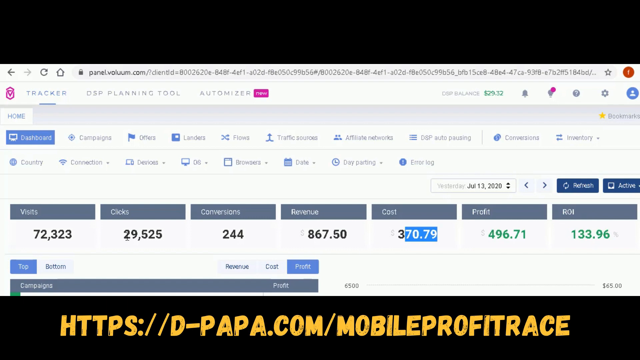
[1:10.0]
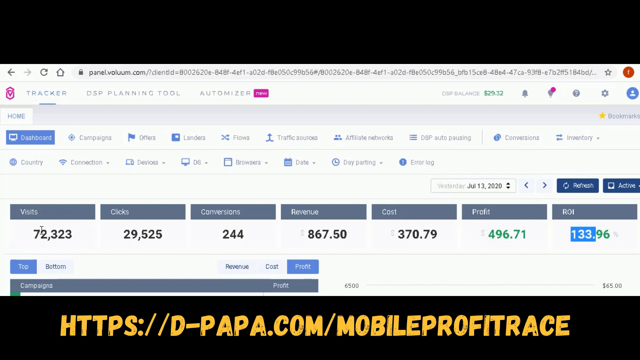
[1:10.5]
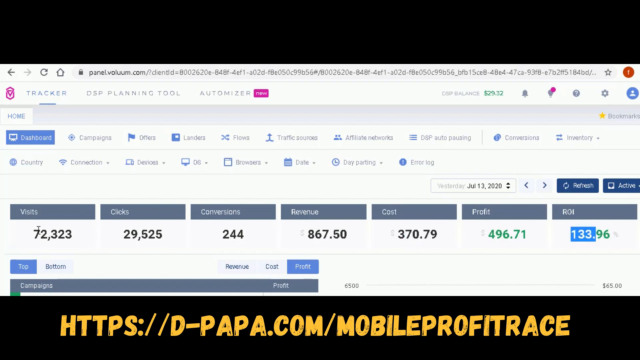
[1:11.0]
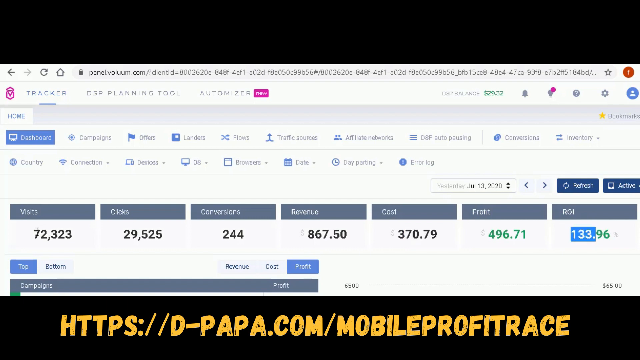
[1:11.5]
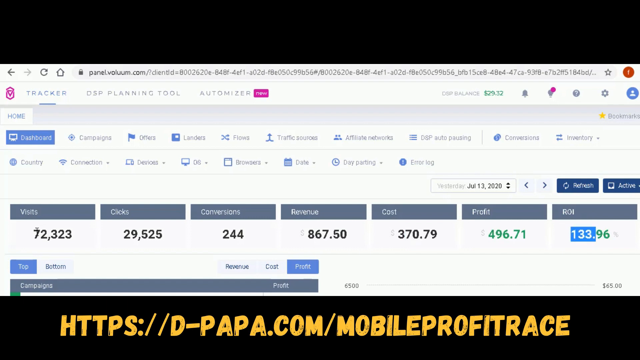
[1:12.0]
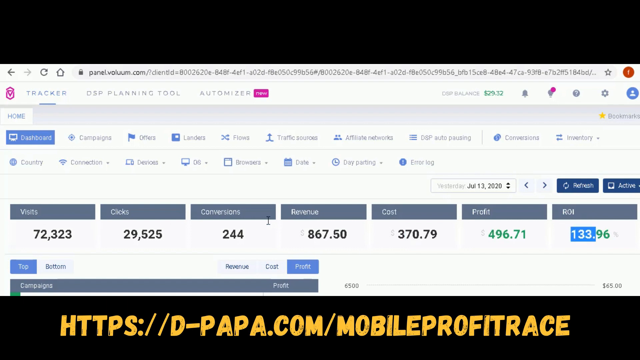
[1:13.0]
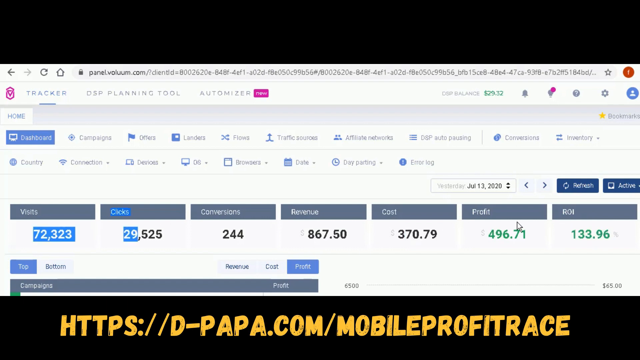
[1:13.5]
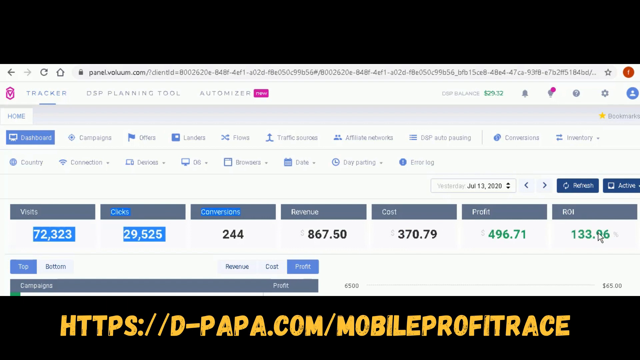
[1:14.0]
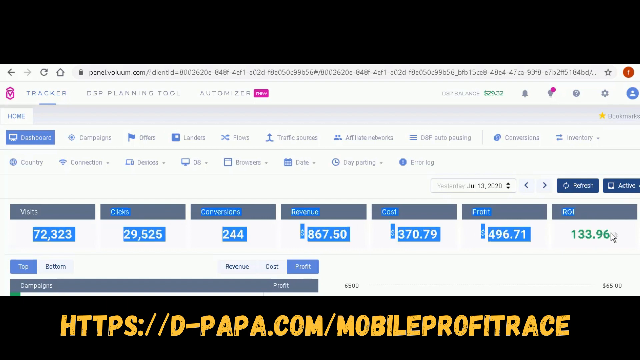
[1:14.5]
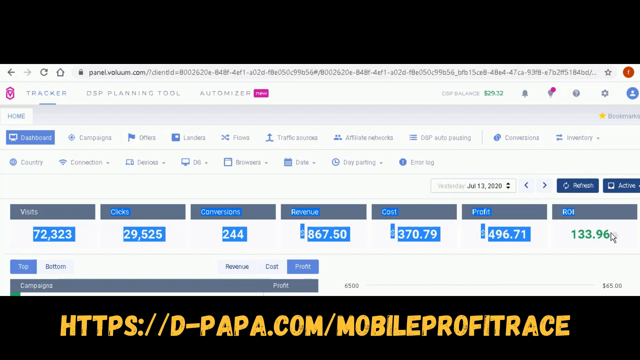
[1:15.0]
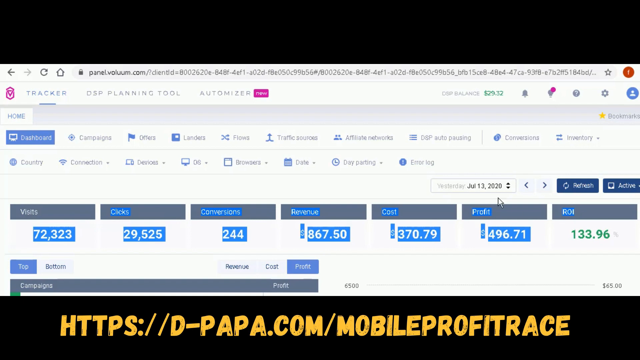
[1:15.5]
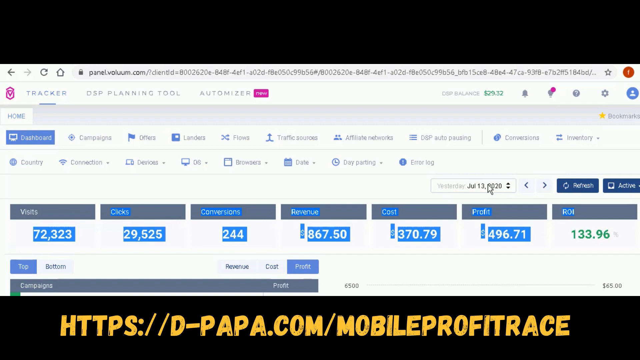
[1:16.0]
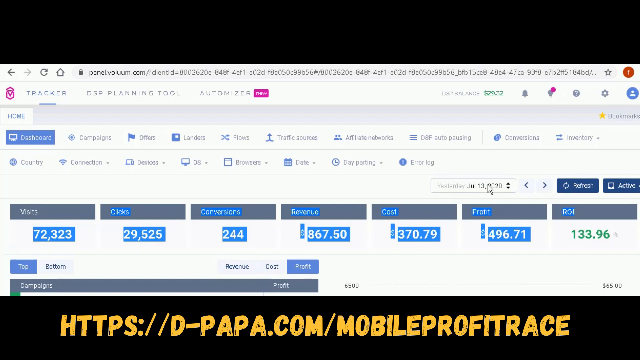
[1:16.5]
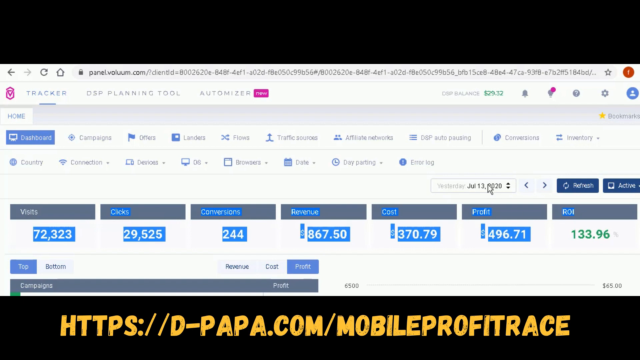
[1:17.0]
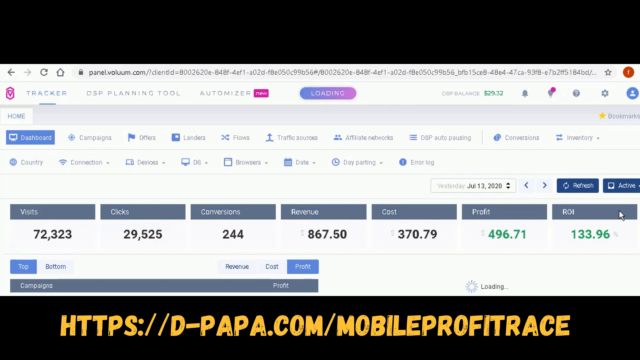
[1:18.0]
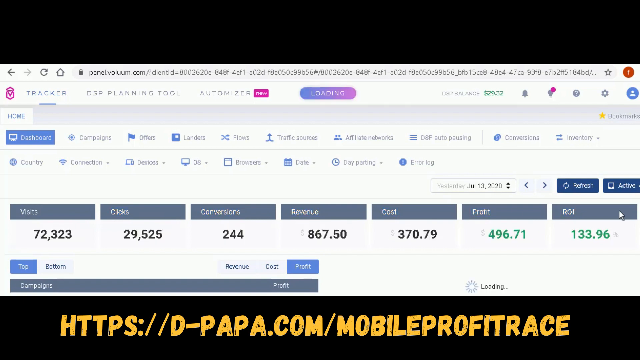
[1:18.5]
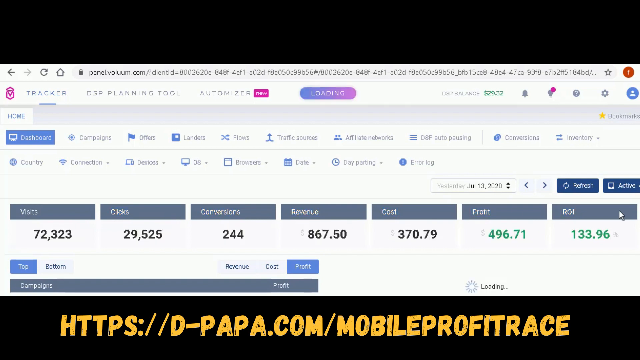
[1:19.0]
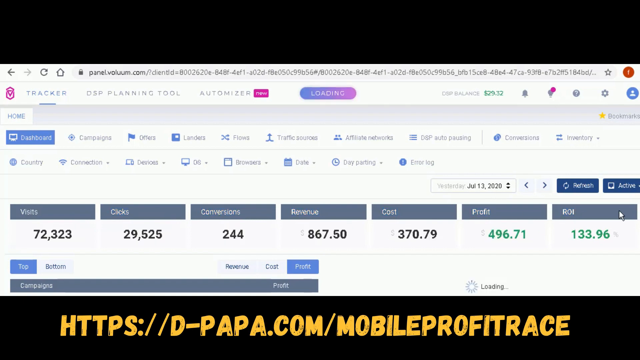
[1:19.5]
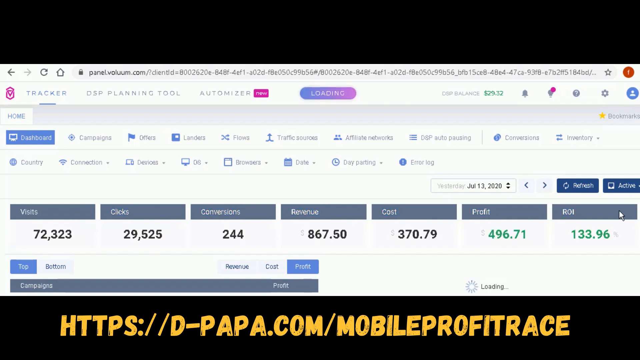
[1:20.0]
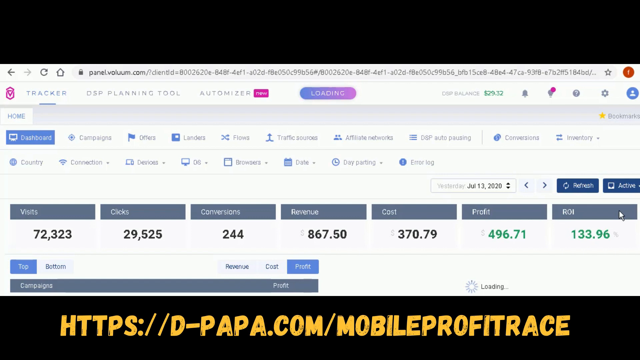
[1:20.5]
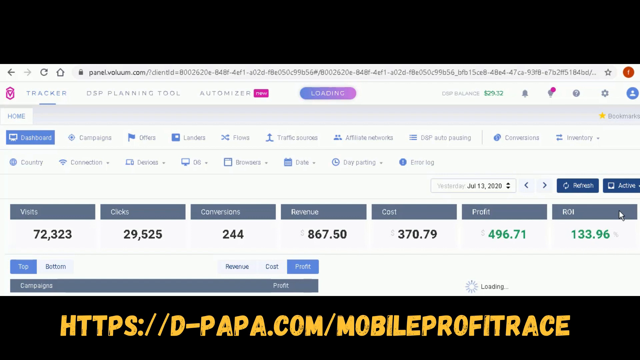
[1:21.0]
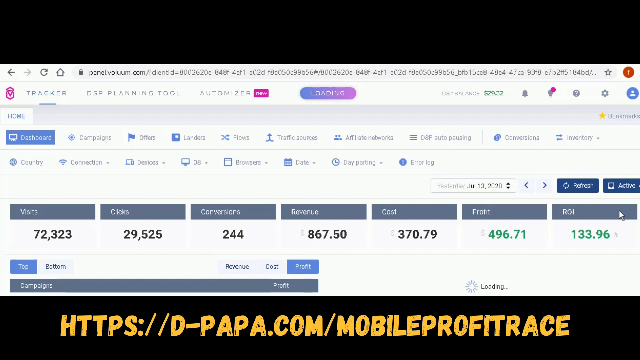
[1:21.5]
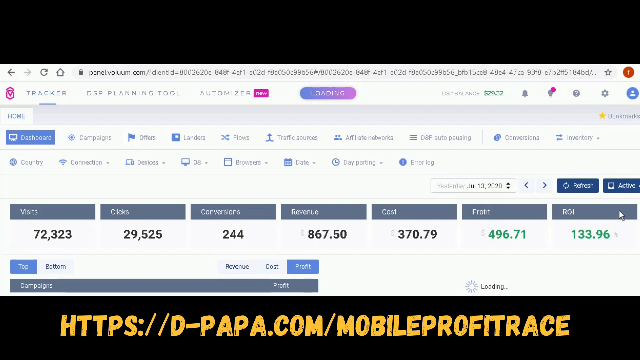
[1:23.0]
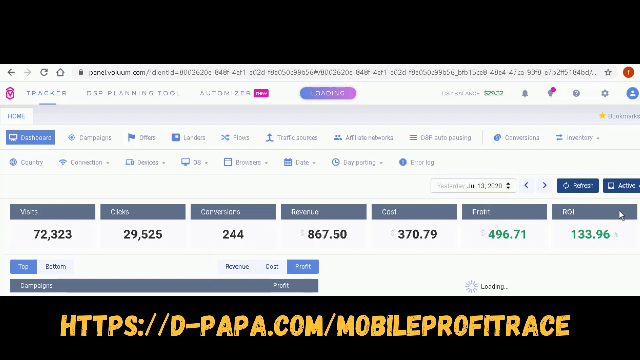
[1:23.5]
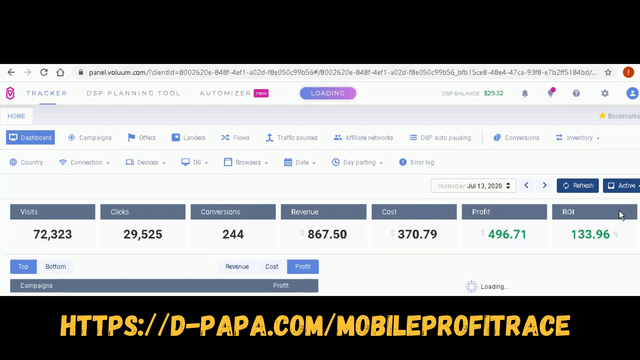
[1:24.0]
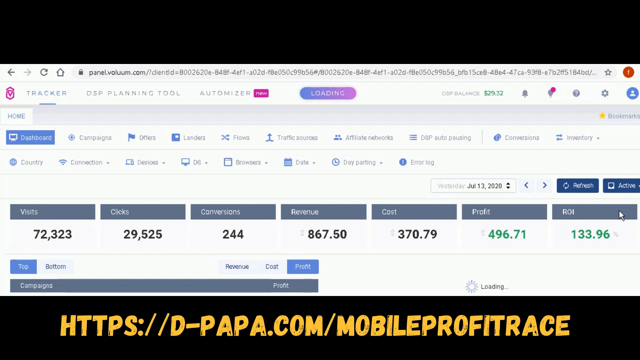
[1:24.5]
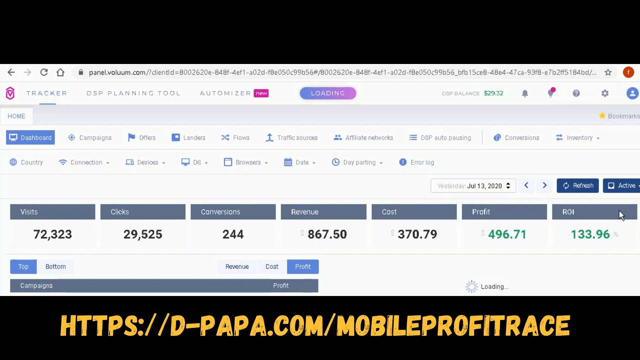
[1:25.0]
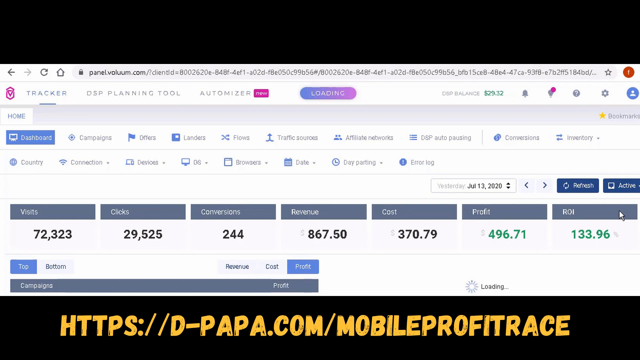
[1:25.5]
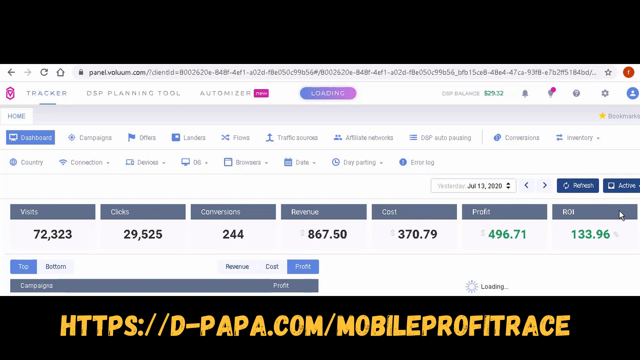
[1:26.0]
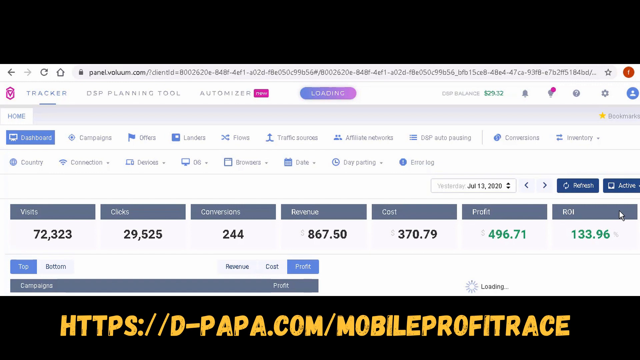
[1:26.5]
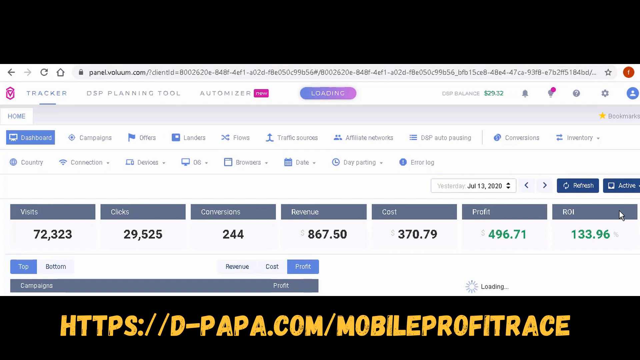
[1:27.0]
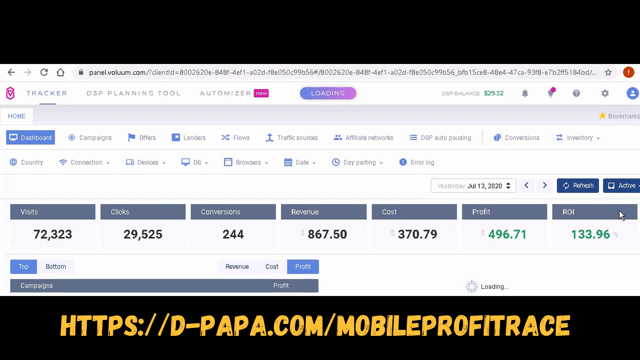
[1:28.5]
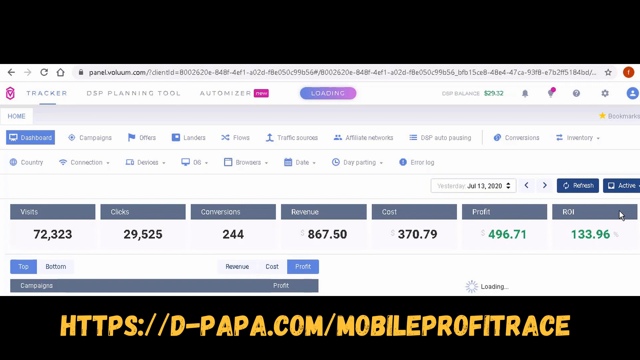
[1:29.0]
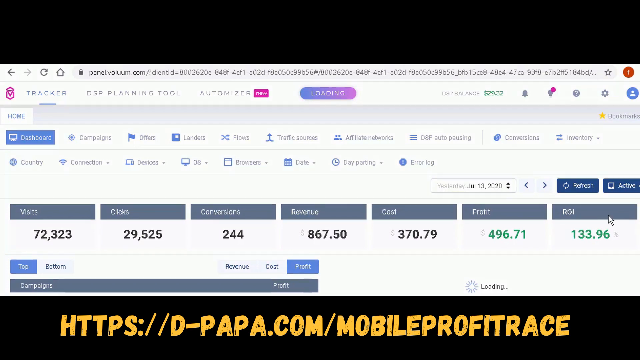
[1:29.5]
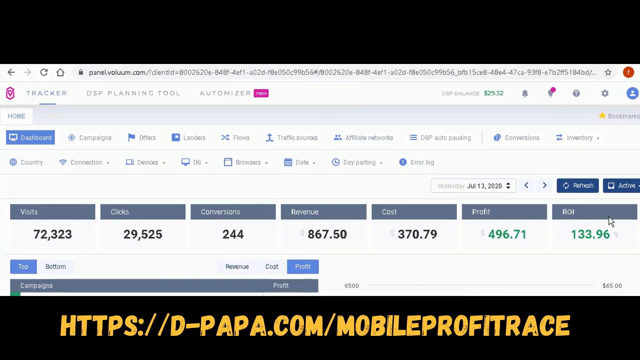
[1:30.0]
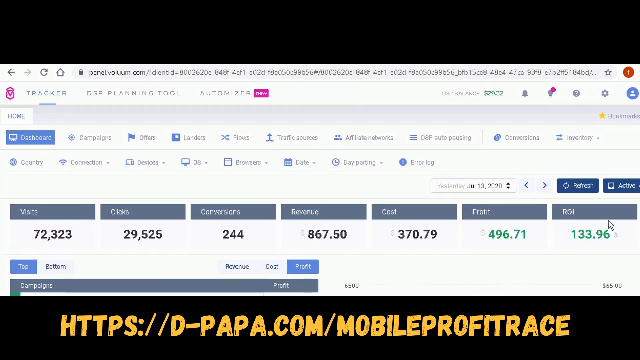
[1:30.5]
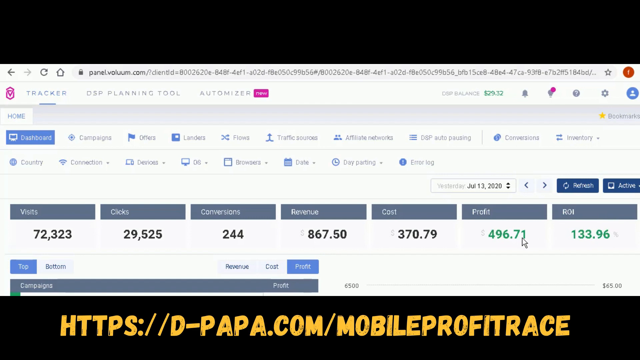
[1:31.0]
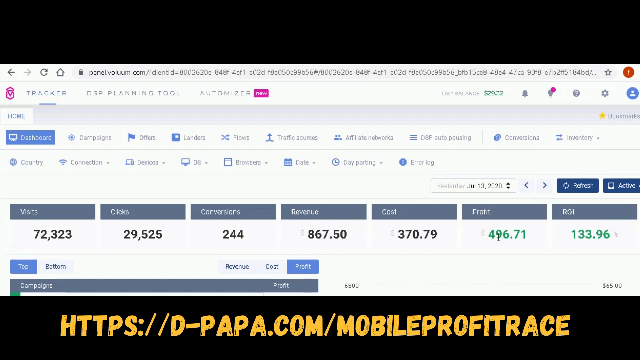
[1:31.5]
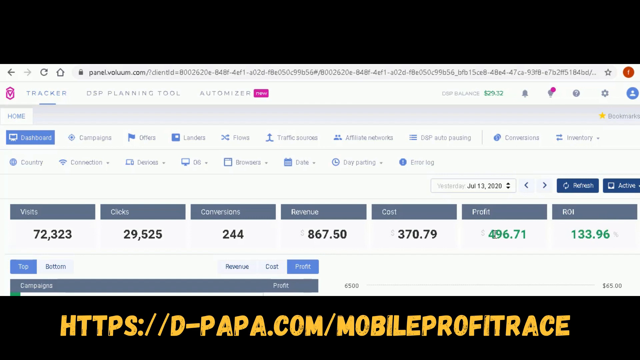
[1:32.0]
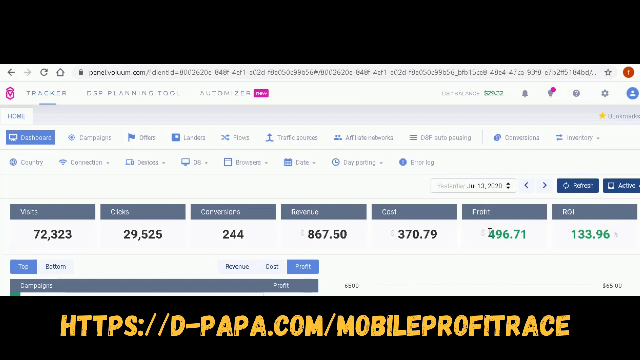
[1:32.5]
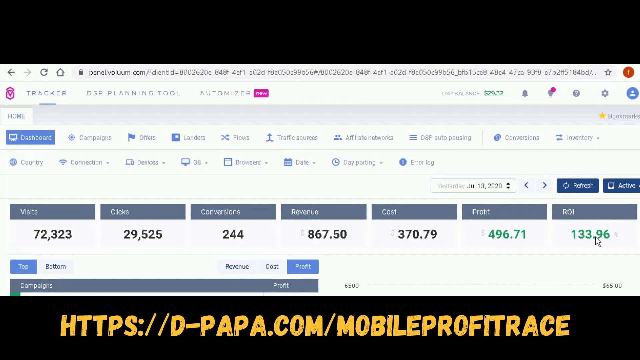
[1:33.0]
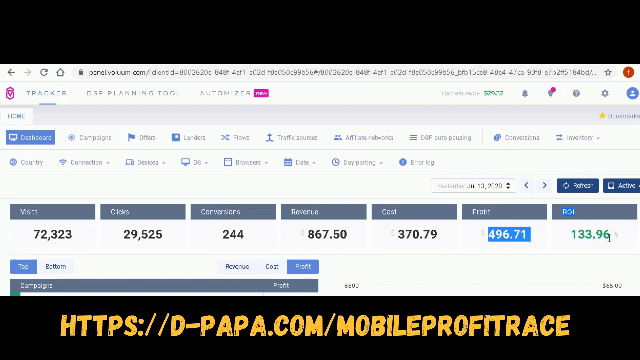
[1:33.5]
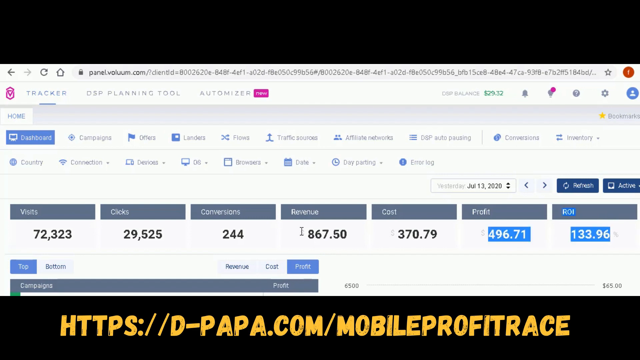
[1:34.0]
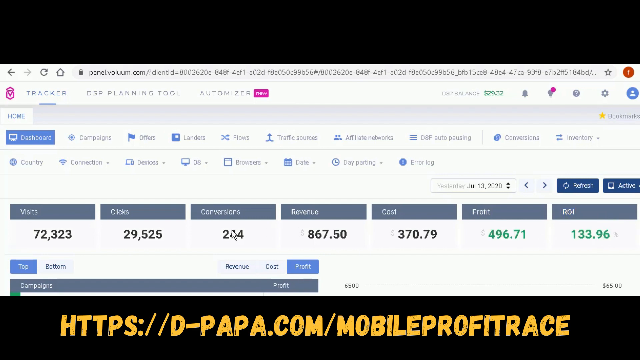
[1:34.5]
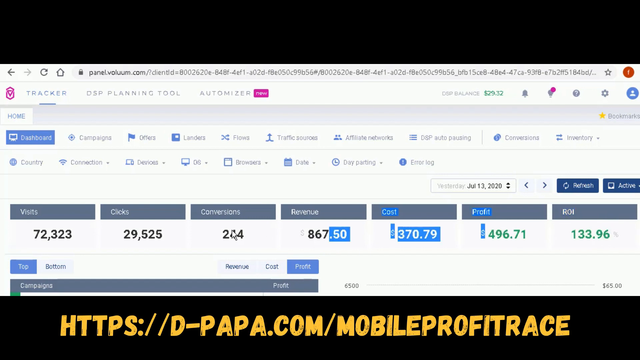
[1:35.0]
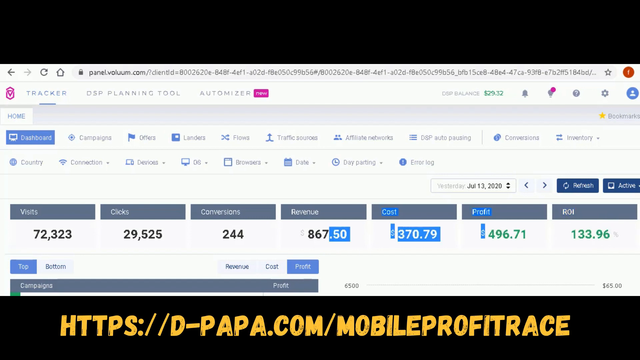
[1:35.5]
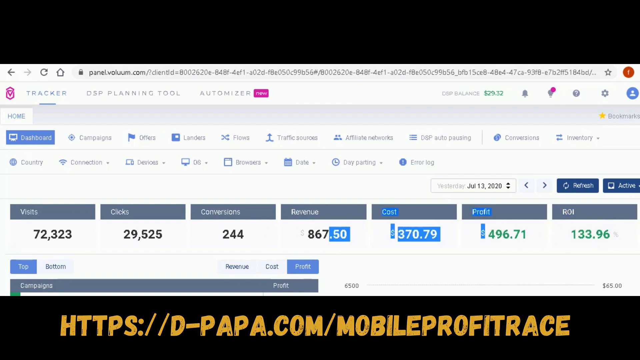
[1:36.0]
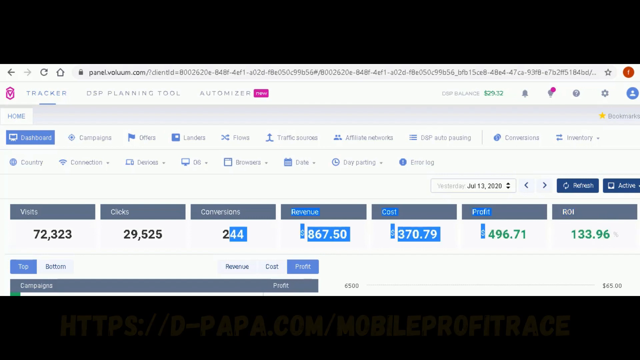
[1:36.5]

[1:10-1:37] The online software is on screen, with the web address at the very top. The cursor highlights all of the figures, then clicks at the top of the screen, and a purple loading button appears, changing to blue, then lilac, then pink before disappearing. The cursor then highlights the profit and ROI figures before highlighting the revenue and the cost. The top line of menu buttons reads dashboard, campaigns, offers, lenders, flows, traffic sources, affiliate networks, DSP auto pausing, conversions and inventory. The next line reads country, connection, devices, OS, browsers, date, day planning and error log. At the very top of the software is a DSP balance shown in green as "$29.32". Next to it is a small grey notification bell, then something like a light bulb with a red notification number "1", then a circle with a question mark in it. To the right of that is a grey settings cog, followed by a blue circular user icon.